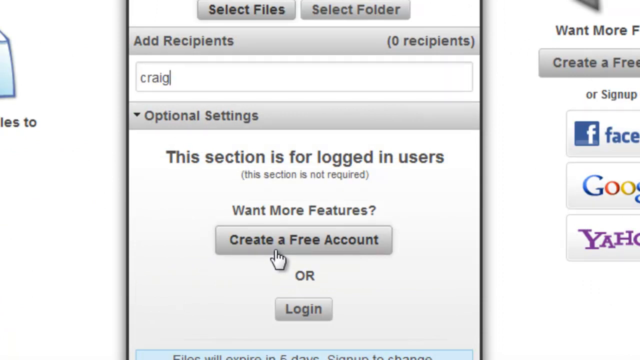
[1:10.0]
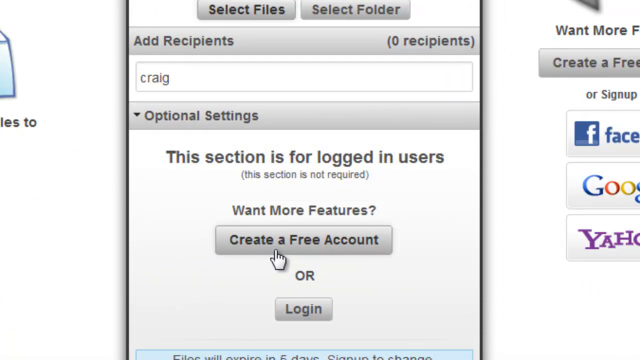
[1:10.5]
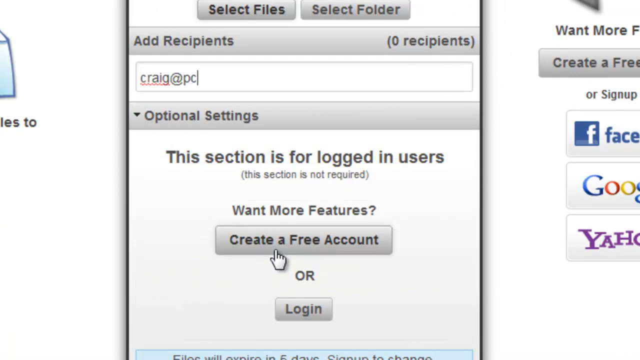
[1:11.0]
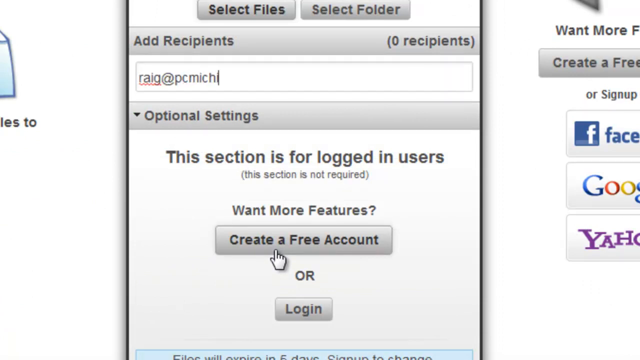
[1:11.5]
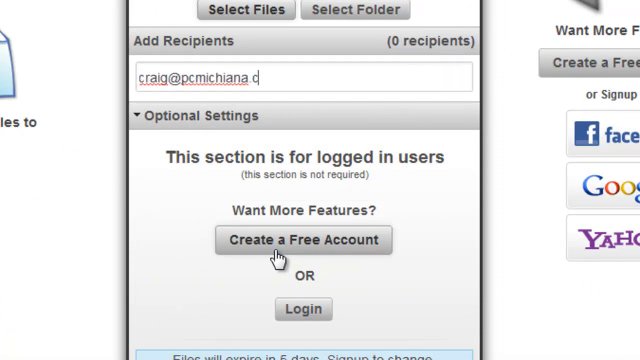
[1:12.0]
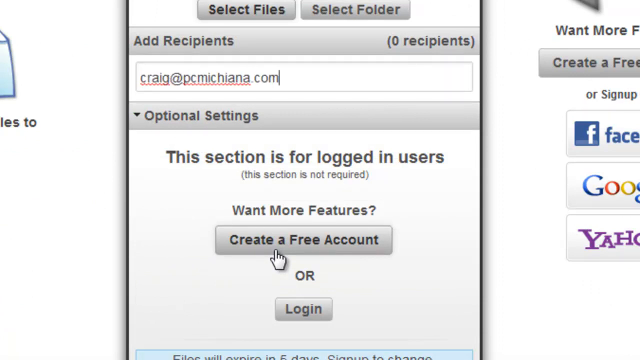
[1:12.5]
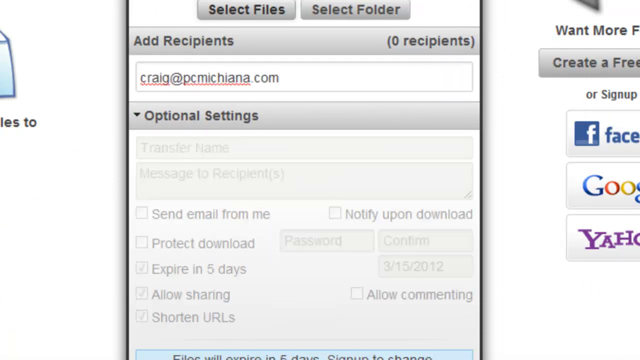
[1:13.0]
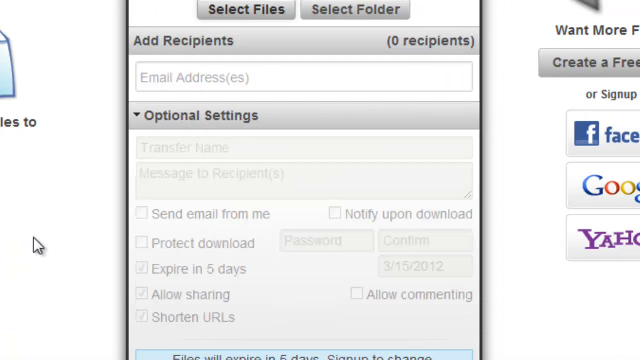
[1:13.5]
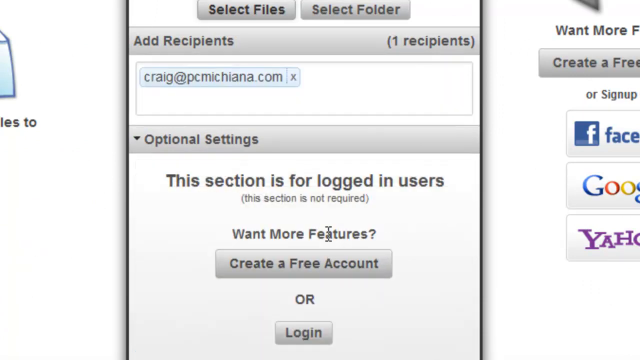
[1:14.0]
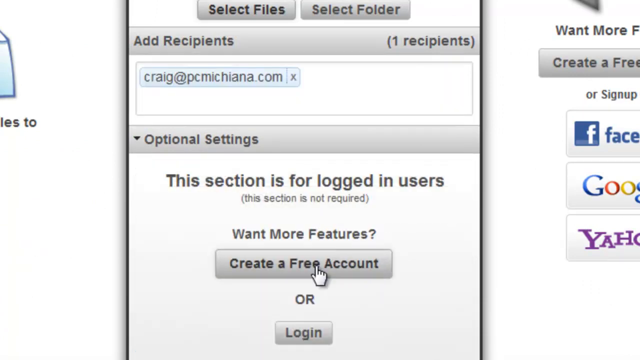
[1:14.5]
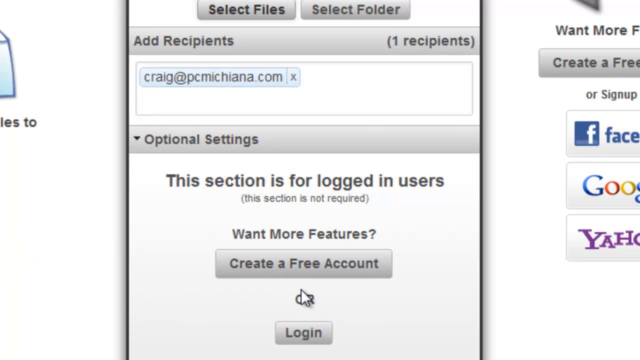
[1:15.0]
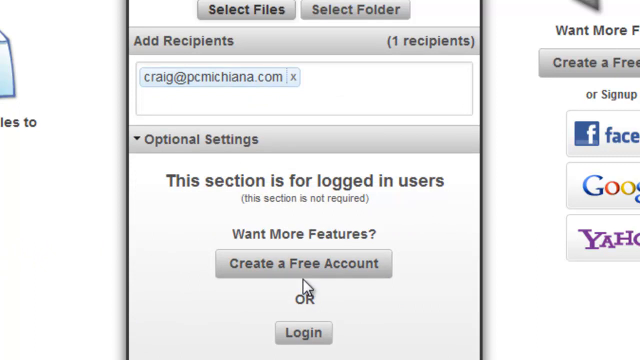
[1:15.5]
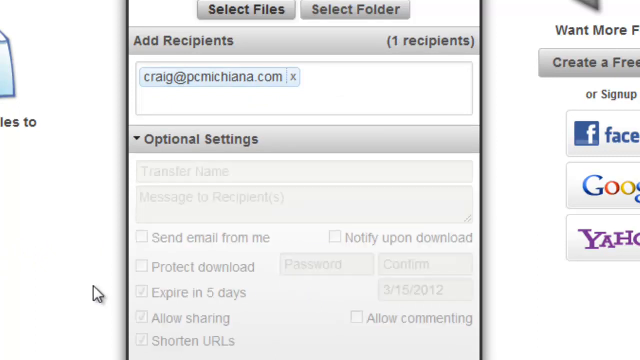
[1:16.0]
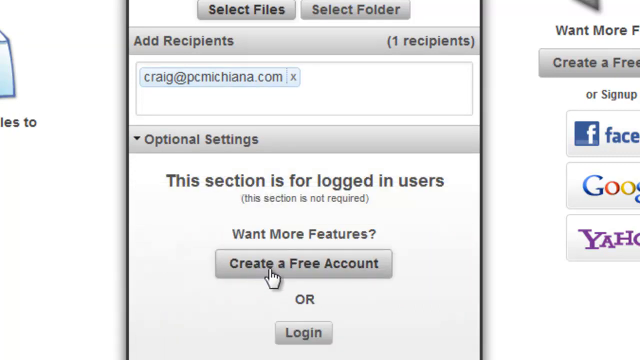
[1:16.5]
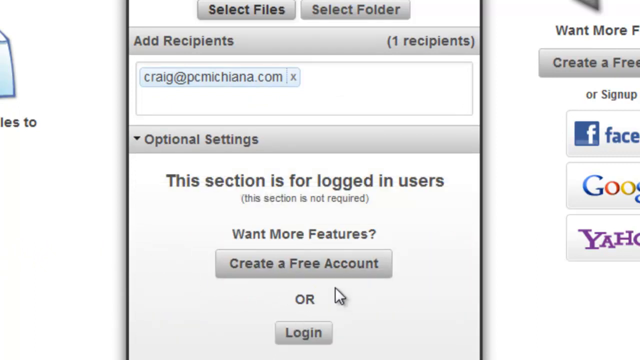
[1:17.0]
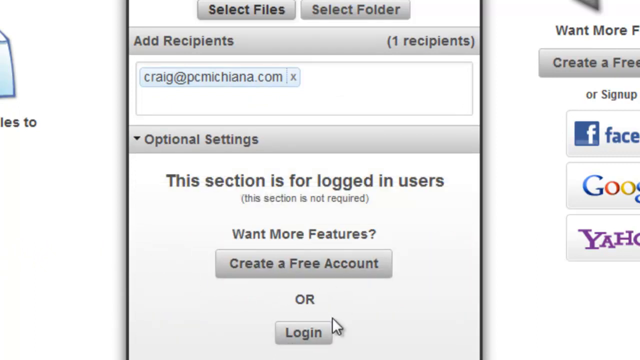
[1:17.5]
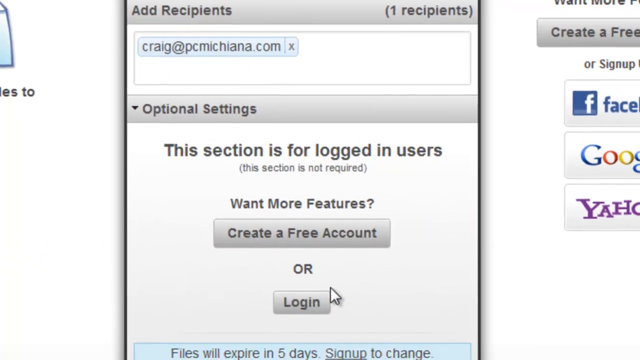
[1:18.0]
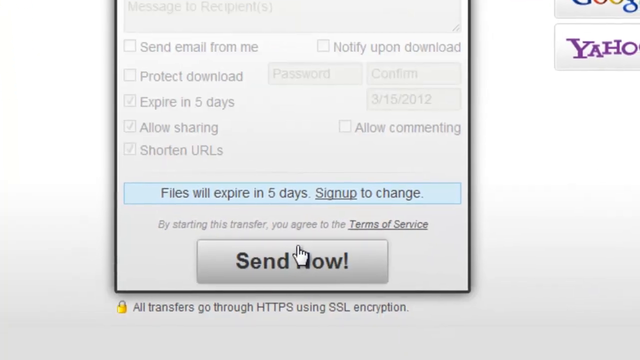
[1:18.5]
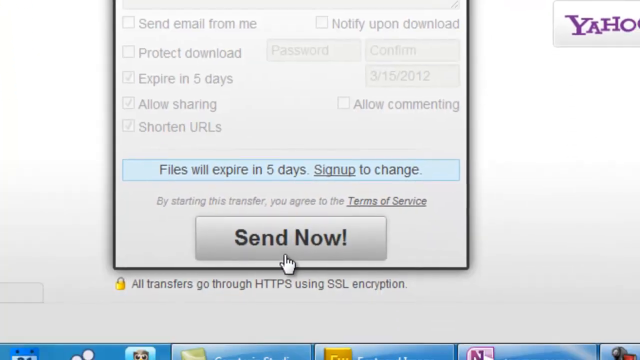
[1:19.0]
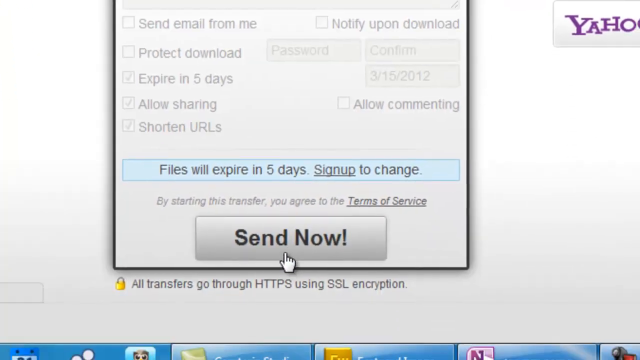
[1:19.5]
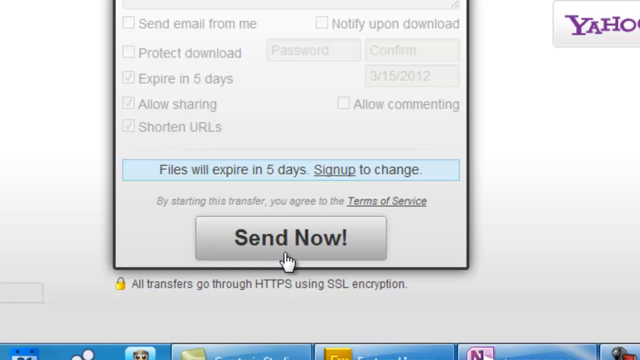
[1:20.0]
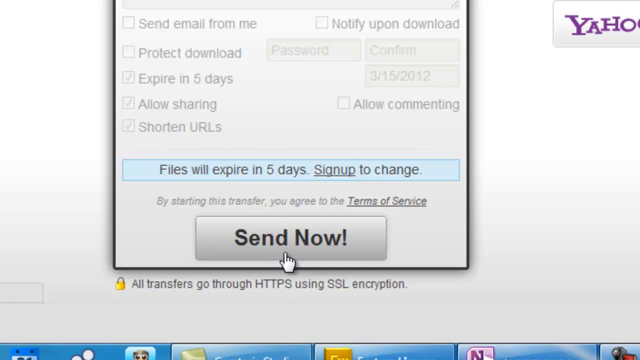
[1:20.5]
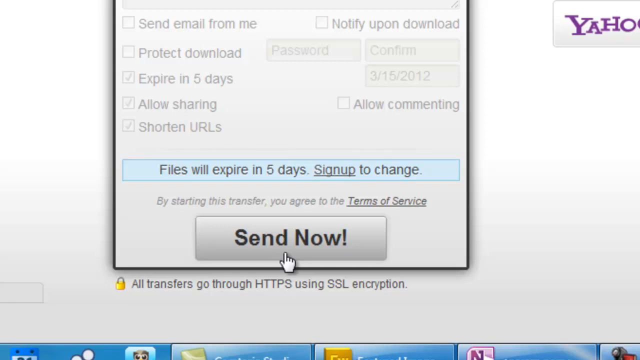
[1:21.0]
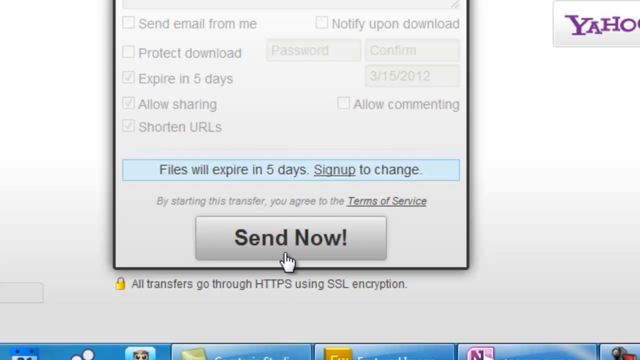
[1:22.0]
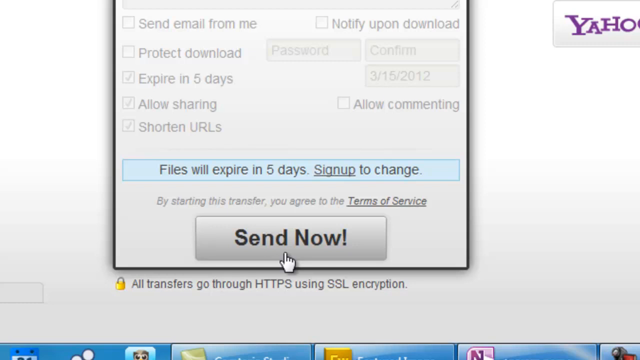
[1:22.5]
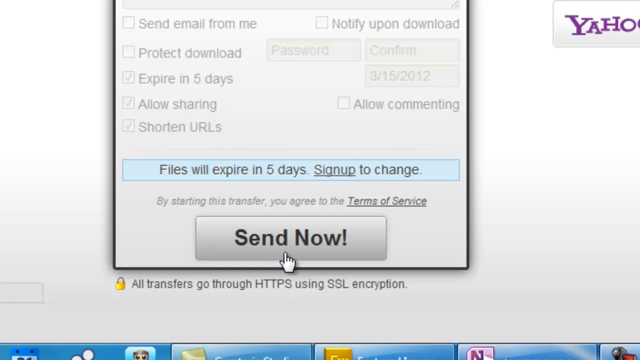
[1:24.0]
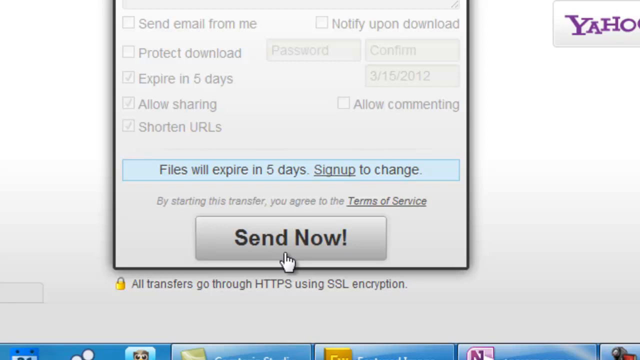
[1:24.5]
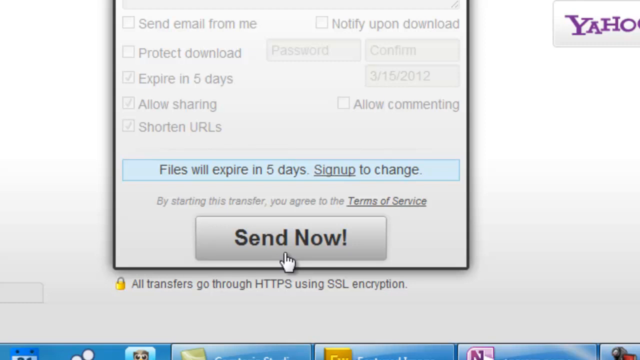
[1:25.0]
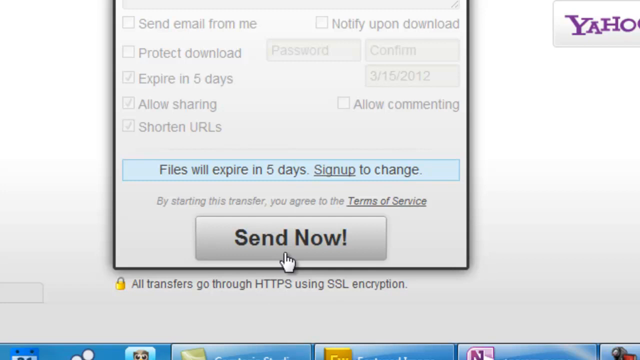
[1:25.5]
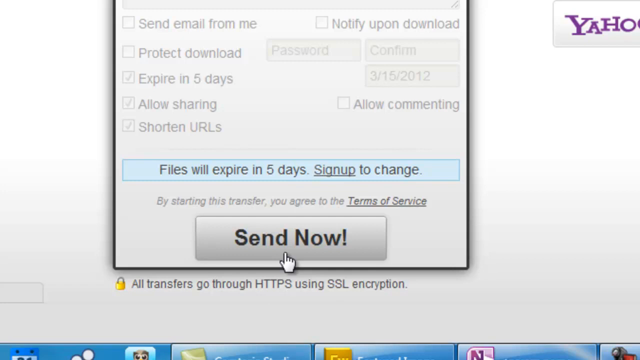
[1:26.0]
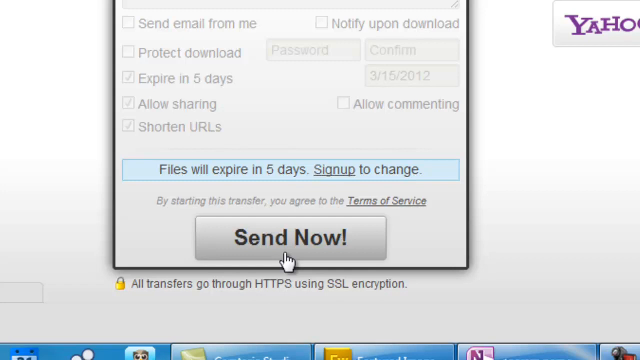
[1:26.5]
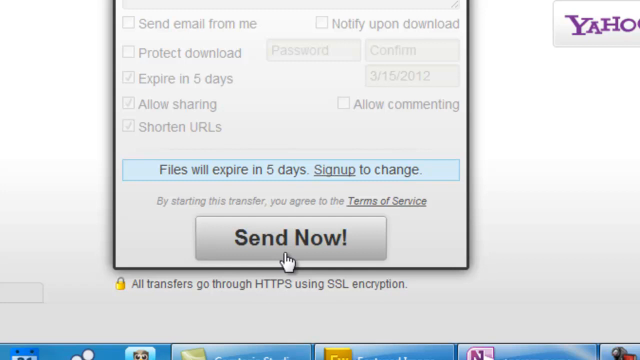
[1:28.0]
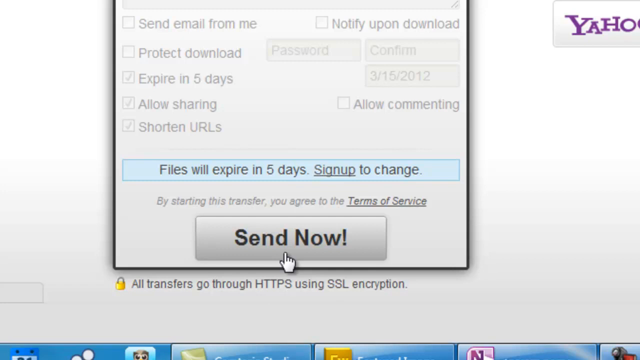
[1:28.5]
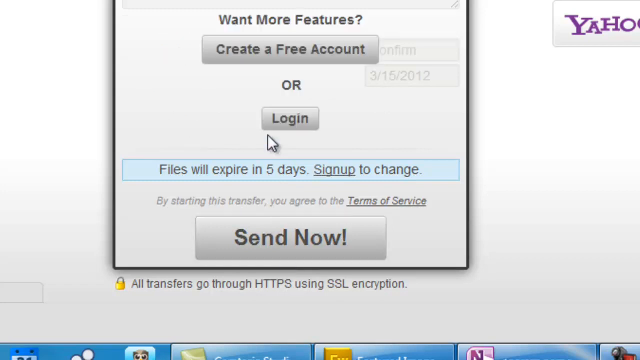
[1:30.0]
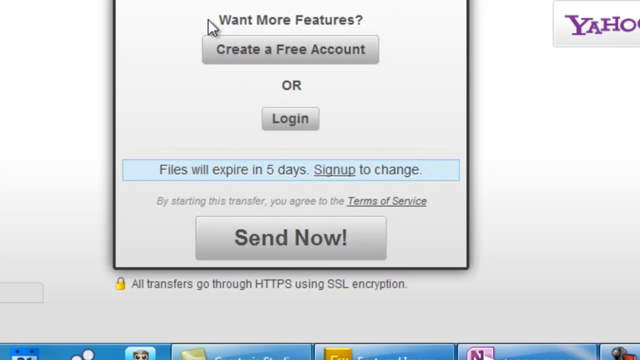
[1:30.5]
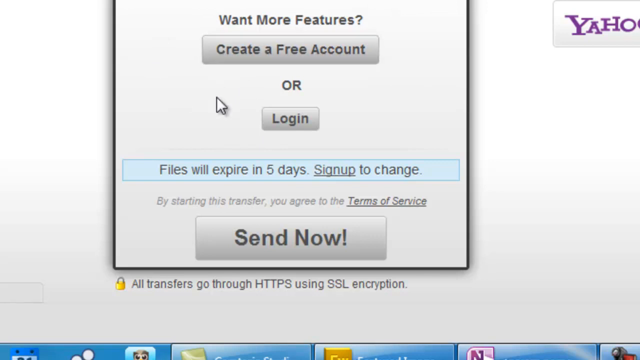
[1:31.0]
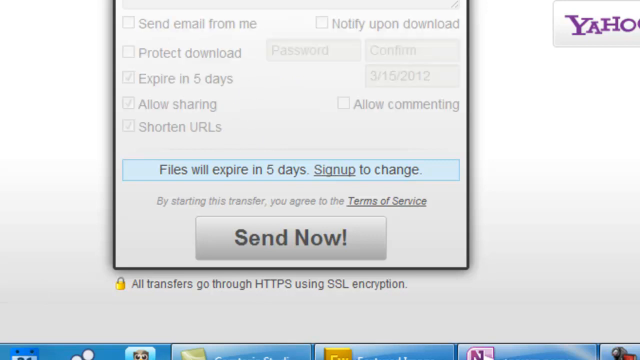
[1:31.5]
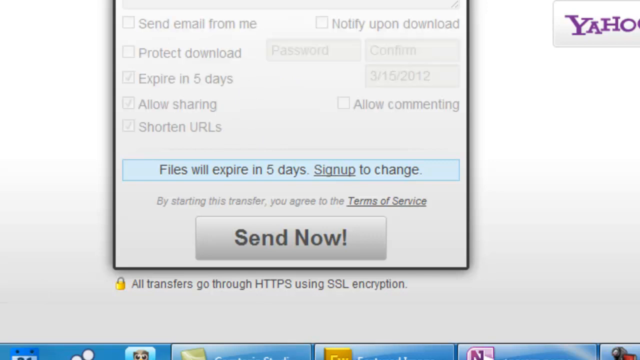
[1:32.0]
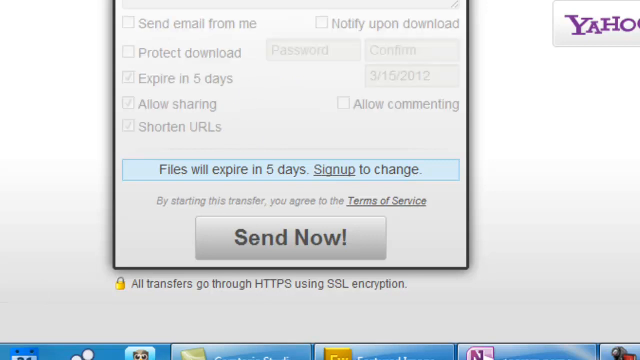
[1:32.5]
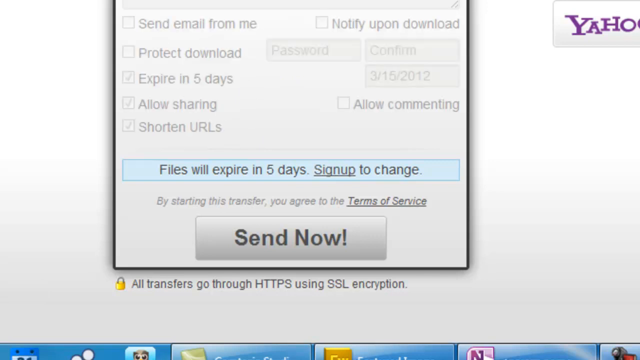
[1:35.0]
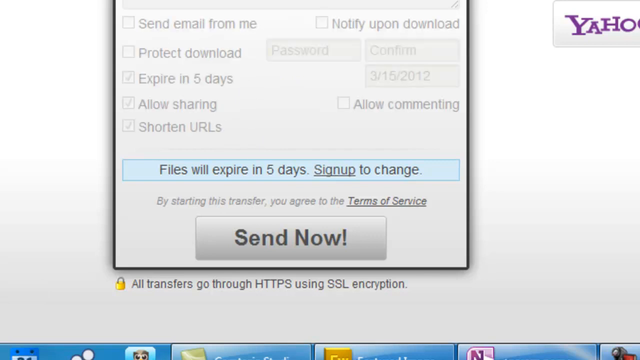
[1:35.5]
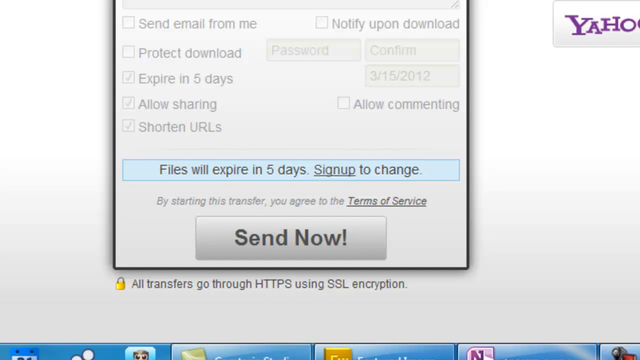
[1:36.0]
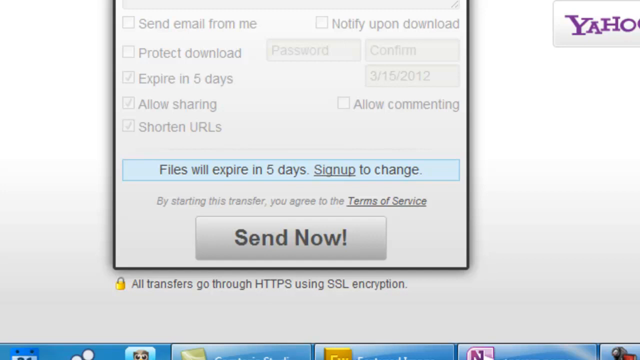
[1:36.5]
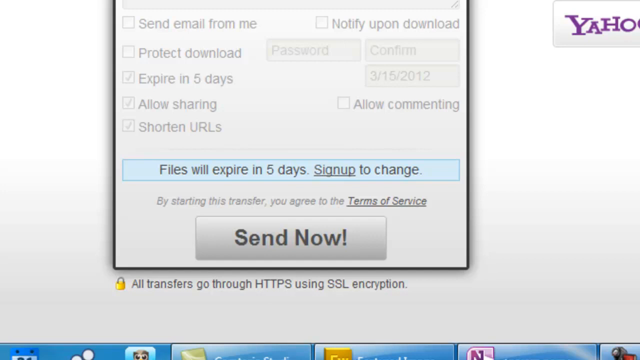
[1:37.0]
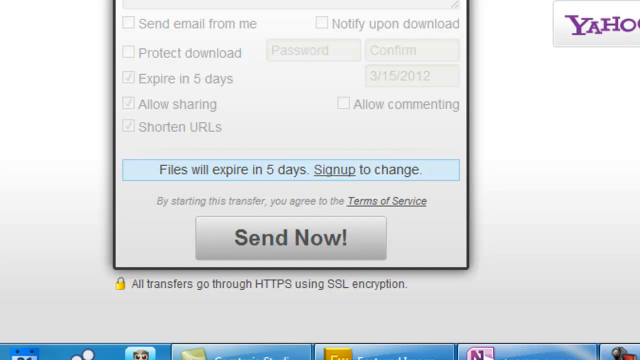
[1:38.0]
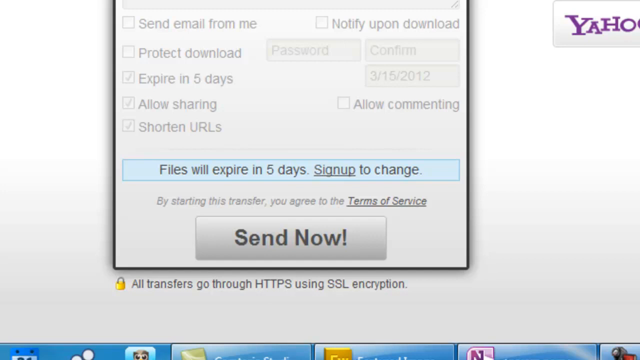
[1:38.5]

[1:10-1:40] A full email address, craig@pcmichia.com, is typed into Add Recipients; as it is typed, some of the text is underlined in red. The address then turns blue with a small cross next to it. The cursor moves down to the bottom of the section, where it says "Send Now!". This box is larger than the other boxes, with "Send" and "Now" each starting with a capital letter and an exclamation mark at the end. Above it is a banner with a blue background that says "files will expire in five days. Sign up to change", with "sign up" underlined. Beneath the box is a padlock and text reading "all transfers go through HTTPS using SSL encryption". The cursor circles anticlockwise around two sections of the box before selecting its chosen one, turning into a hand as it clicks "Send Now!".